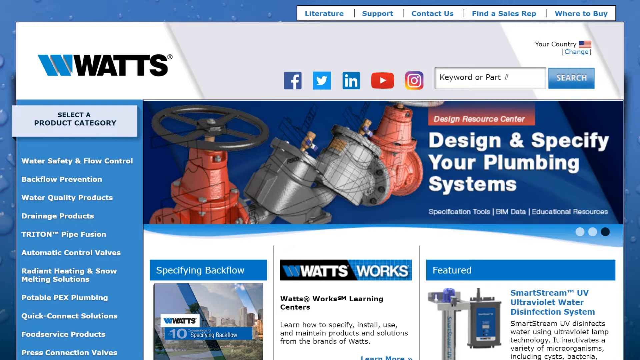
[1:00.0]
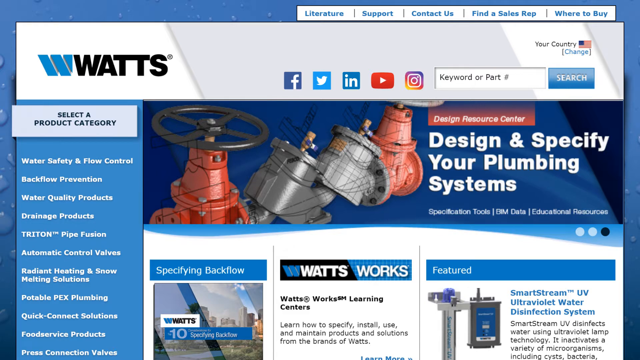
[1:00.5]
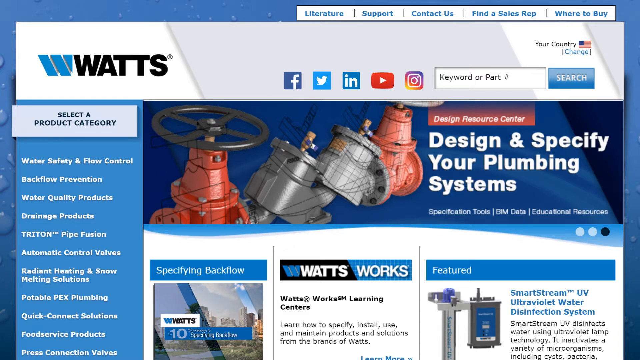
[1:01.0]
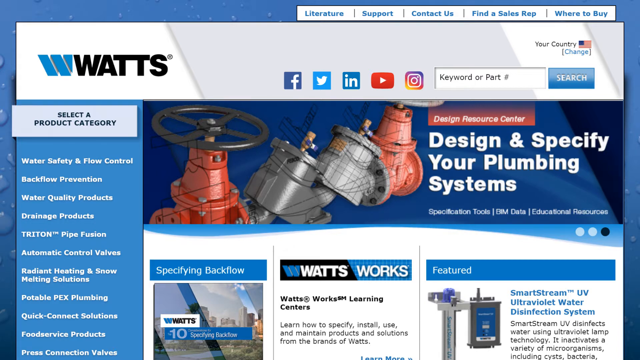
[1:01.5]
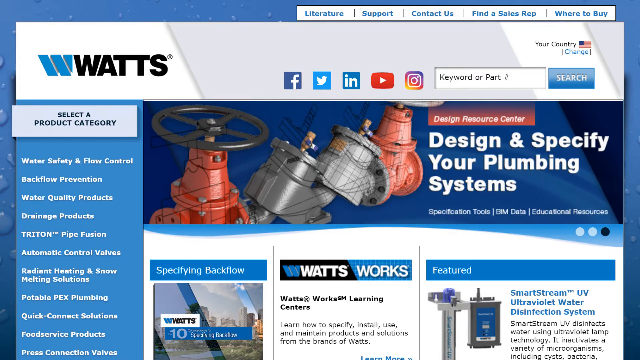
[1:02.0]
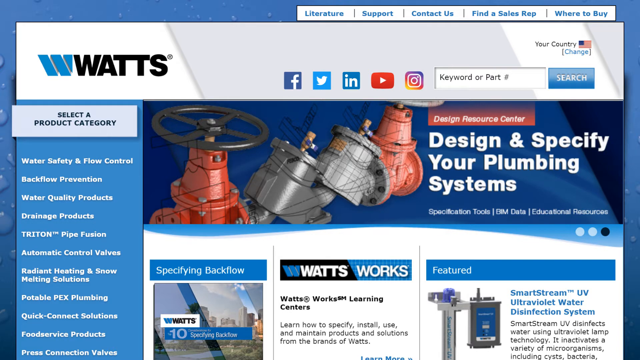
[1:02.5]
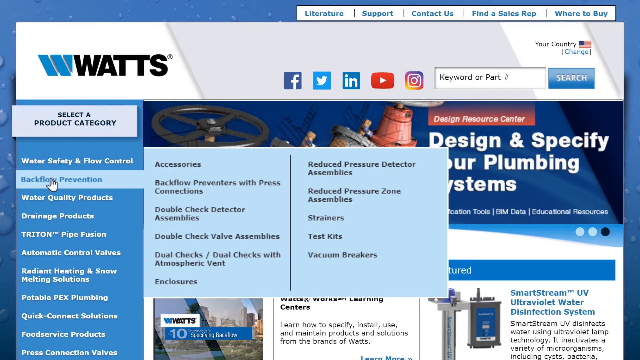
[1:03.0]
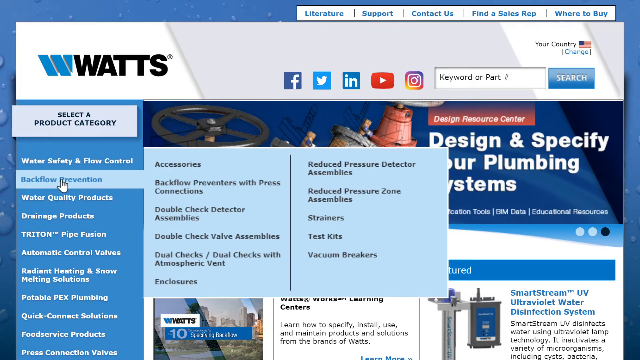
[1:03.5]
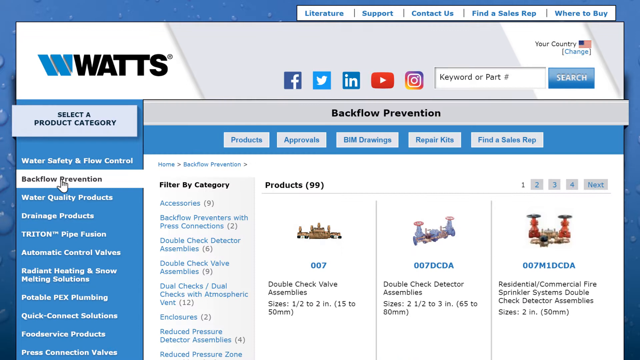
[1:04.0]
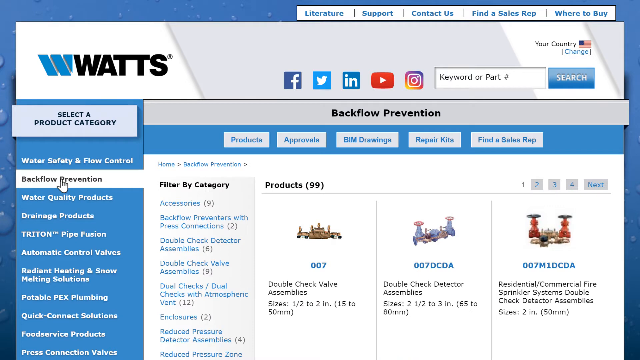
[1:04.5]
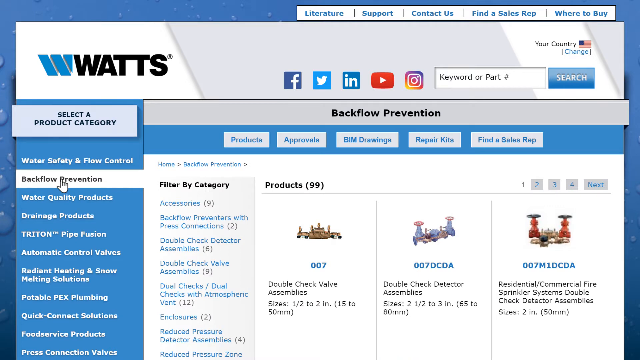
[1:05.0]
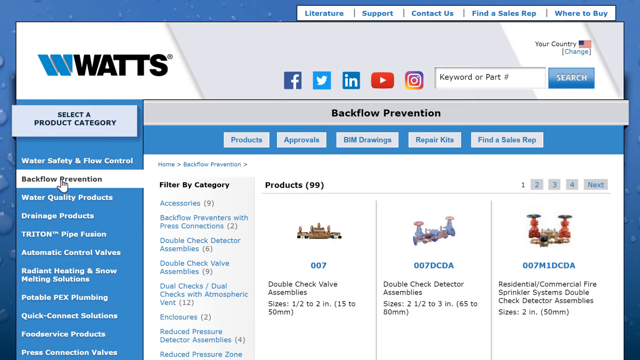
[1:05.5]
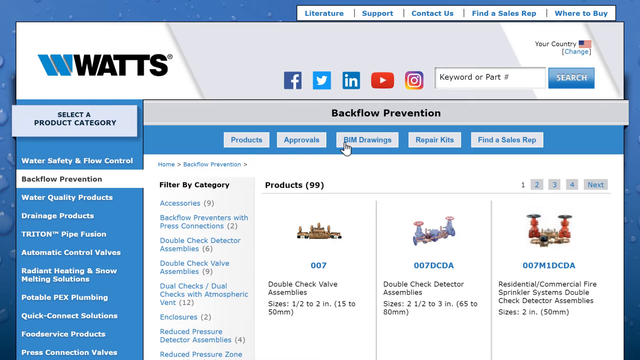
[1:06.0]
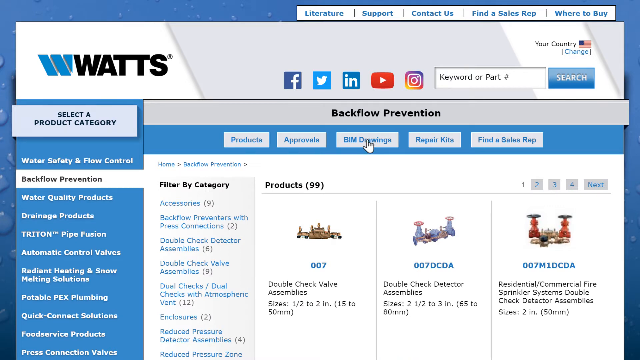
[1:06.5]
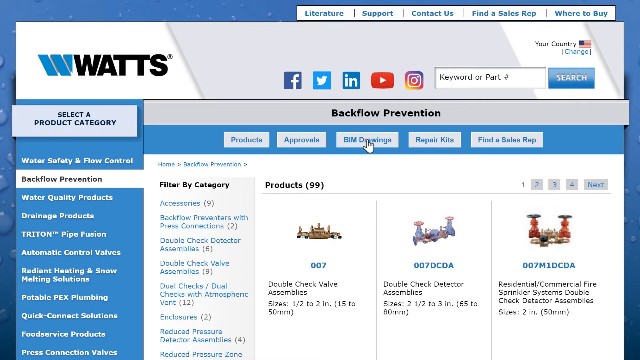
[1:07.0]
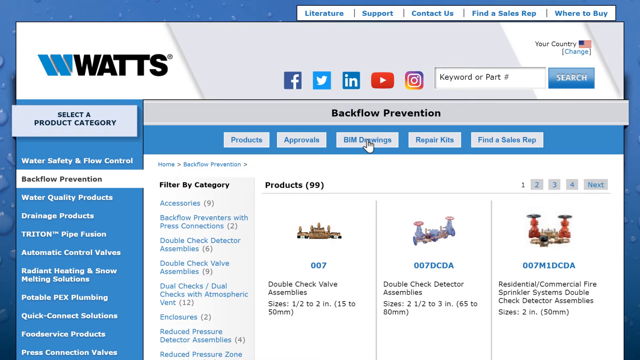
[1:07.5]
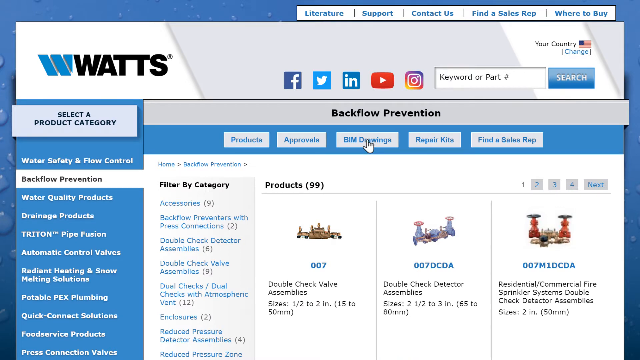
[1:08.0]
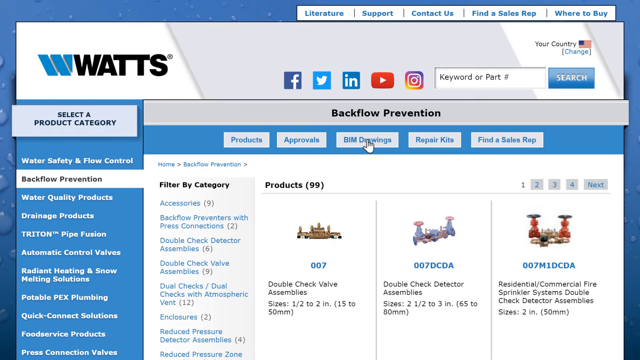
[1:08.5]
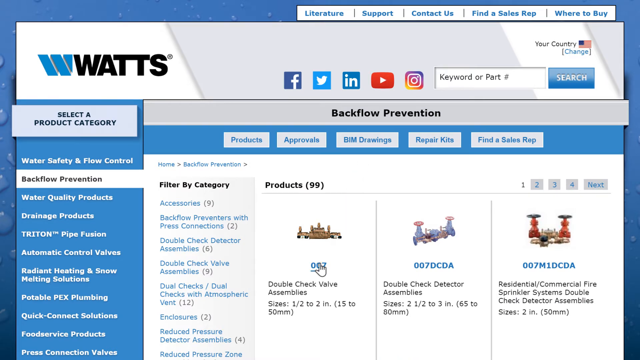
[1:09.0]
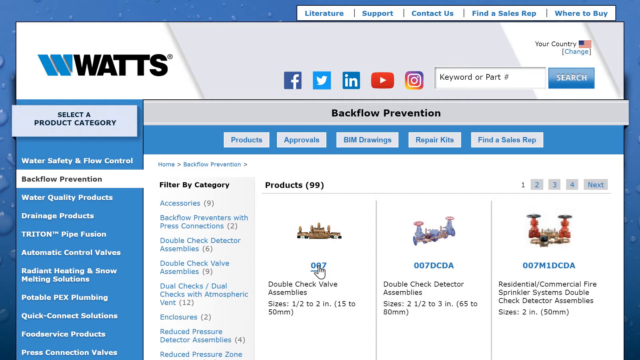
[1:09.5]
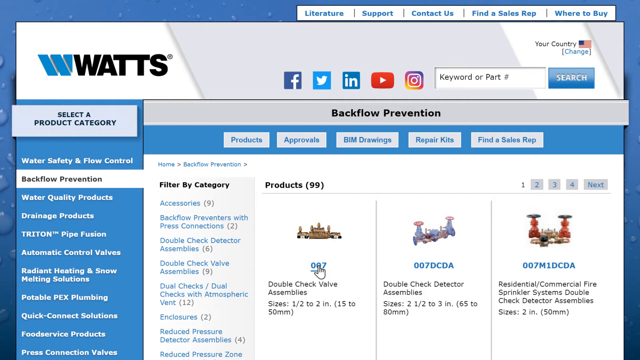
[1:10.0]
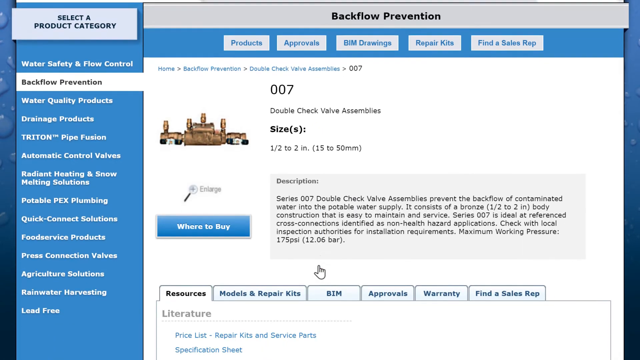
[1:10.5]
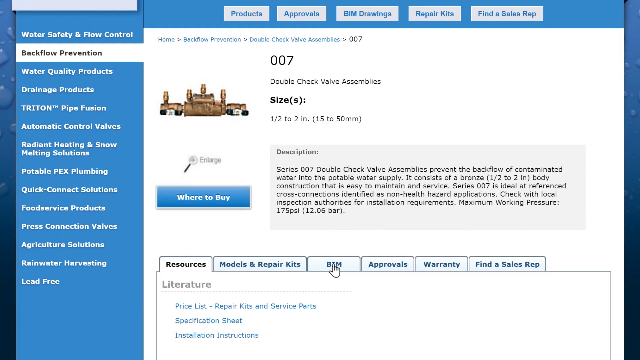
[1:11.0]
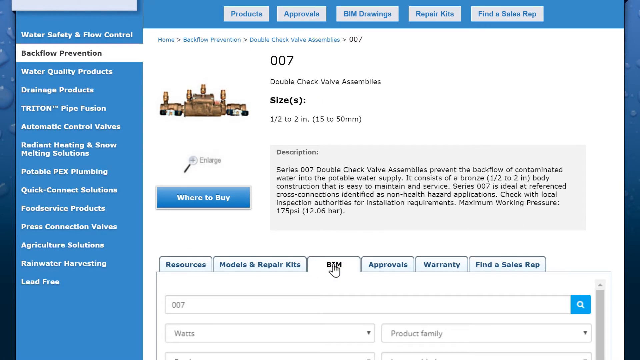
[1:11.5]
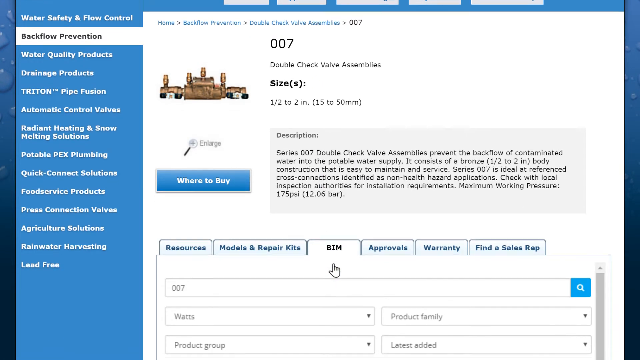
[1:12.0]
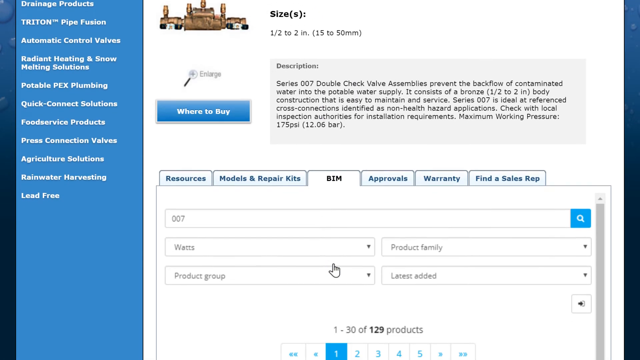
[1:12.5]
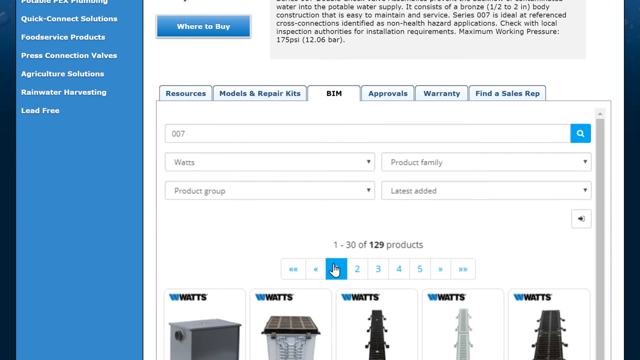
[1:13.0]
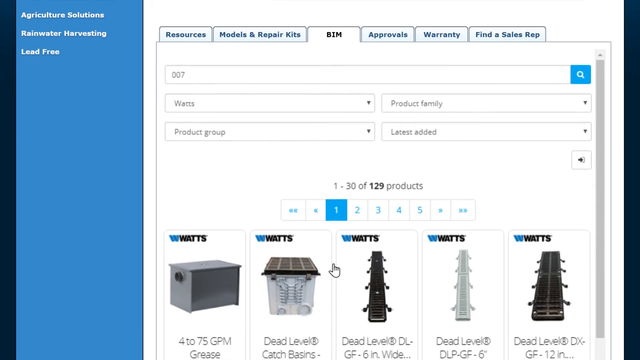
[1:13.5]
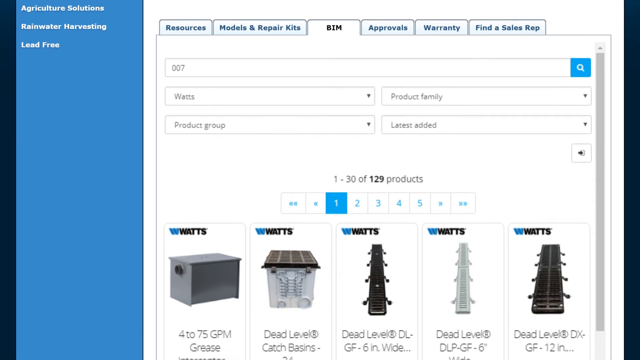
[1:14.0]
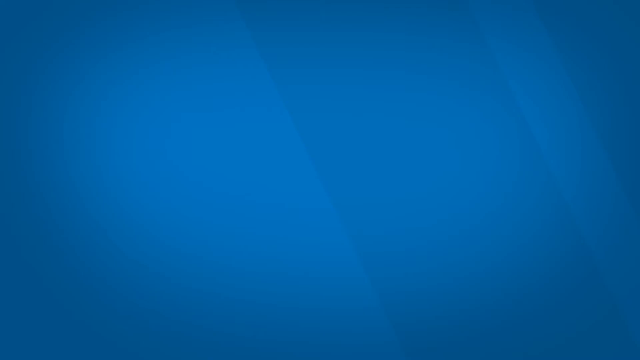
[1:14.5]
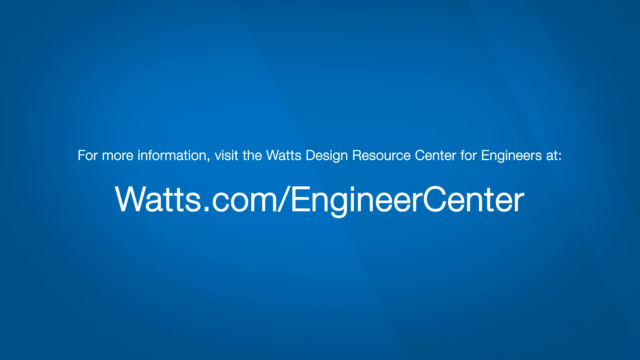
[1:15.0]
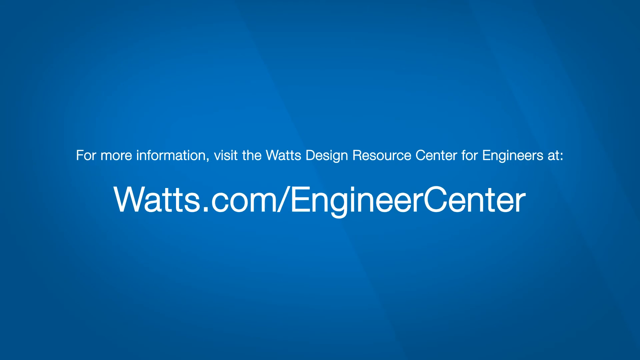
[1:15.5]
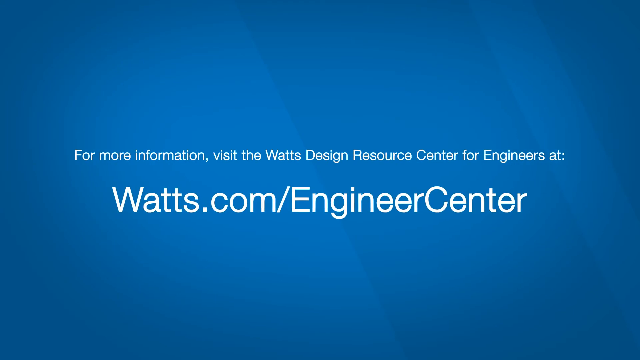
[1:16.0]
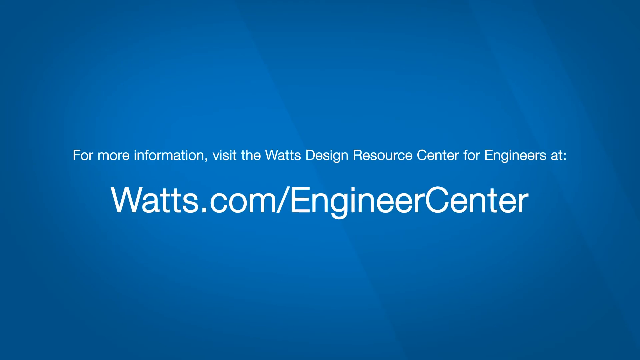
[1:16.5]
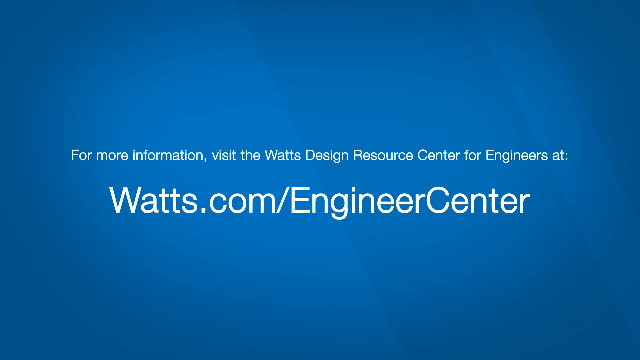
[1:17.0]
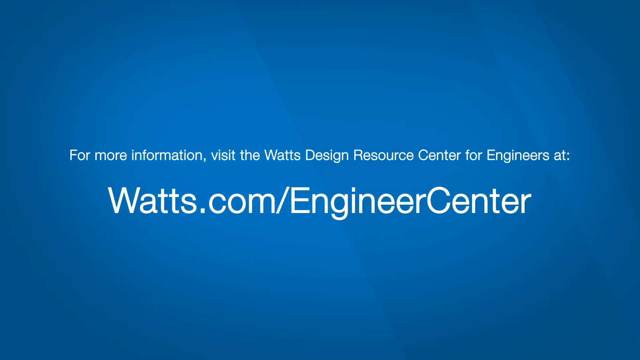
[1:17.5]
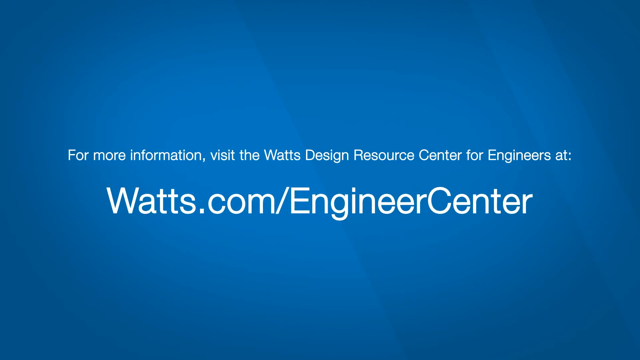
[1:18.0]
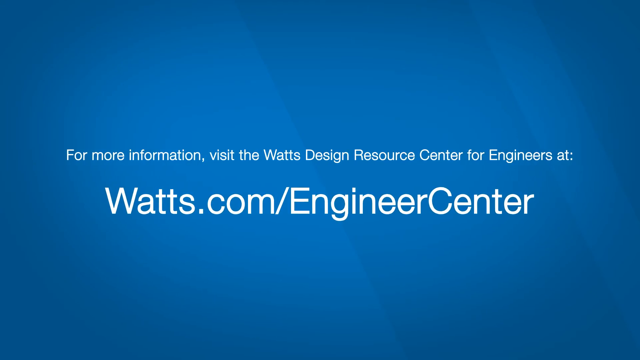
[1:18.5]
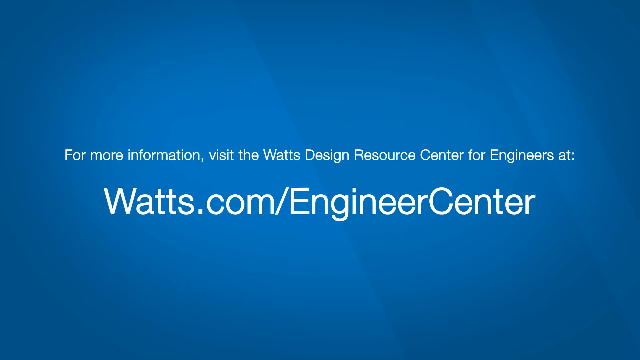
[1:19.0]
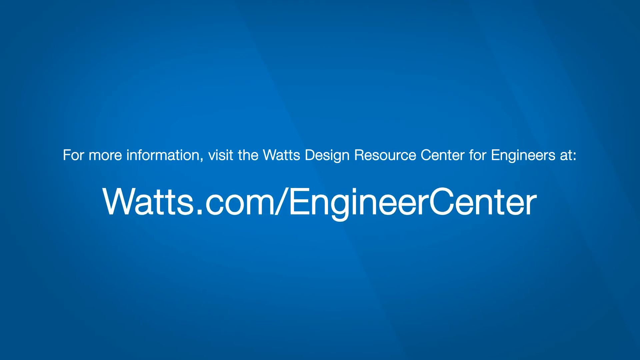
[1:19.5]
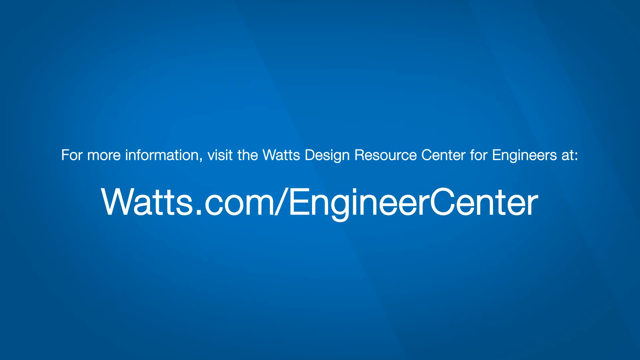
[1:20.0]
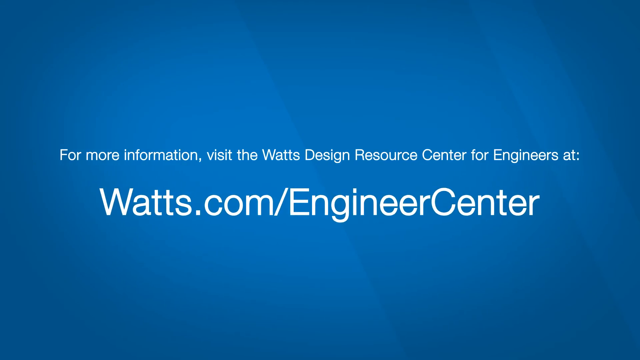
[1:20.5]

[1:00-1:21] On the website, the cursor clicks on flow prevention, then on the BIM drawings, then on the project and BIM, and information is shown. The text "for more information" appears, along with a resource center for engineers labeled as an engineer center. The plumbing website offers different equipment, with links to Facebook, Twitter, YouTube and Instagram, and categories for selecting what is needed, such as water safety, flow prevention and water quality products. The last option lists where to contact them, support, and where to buy.